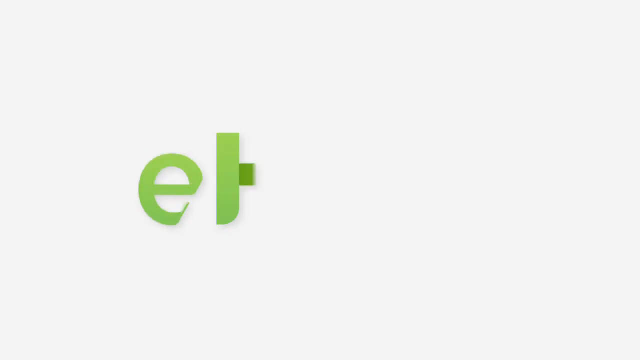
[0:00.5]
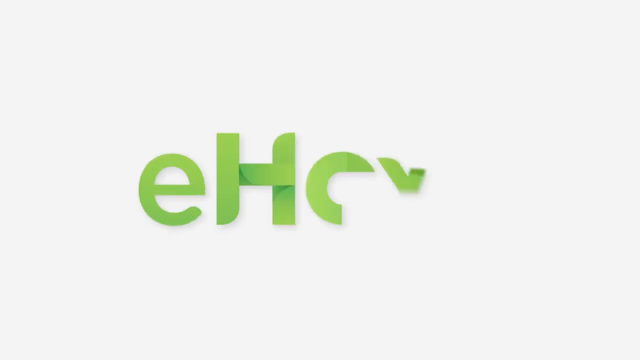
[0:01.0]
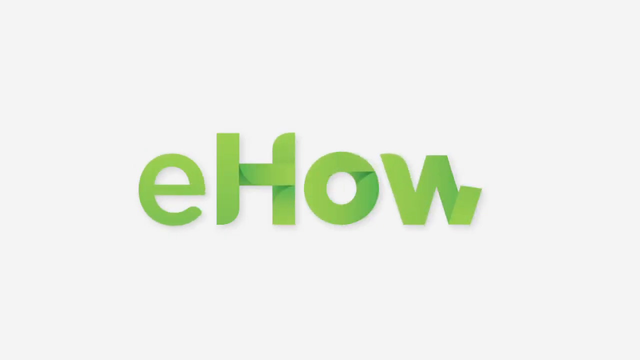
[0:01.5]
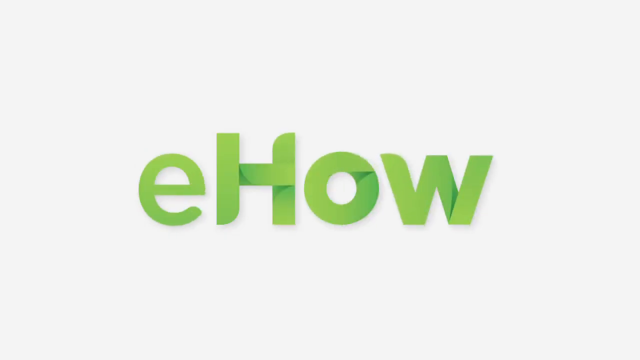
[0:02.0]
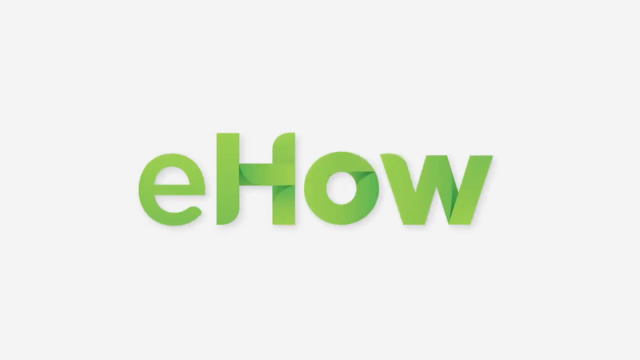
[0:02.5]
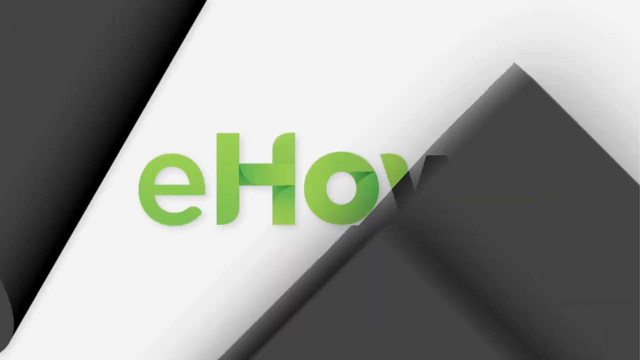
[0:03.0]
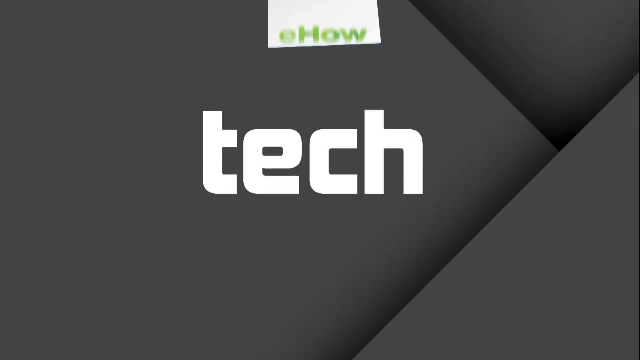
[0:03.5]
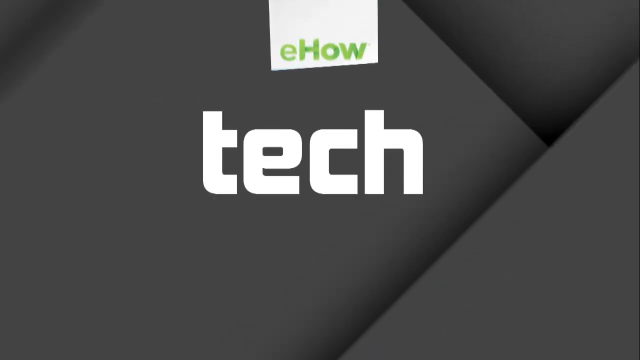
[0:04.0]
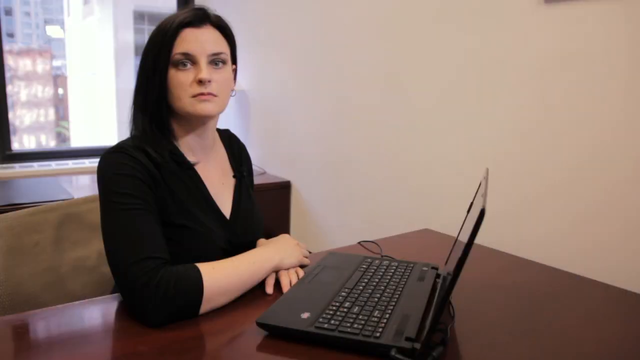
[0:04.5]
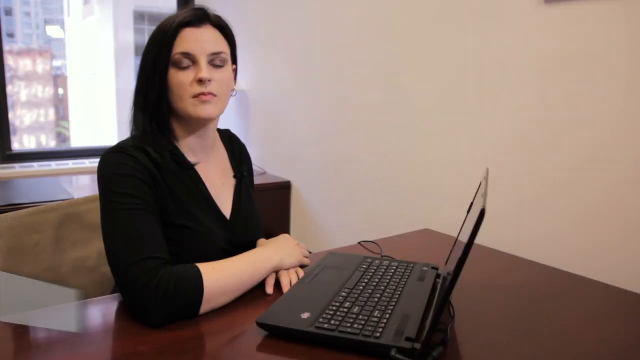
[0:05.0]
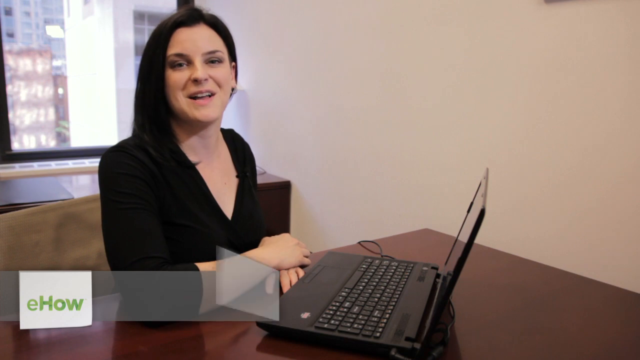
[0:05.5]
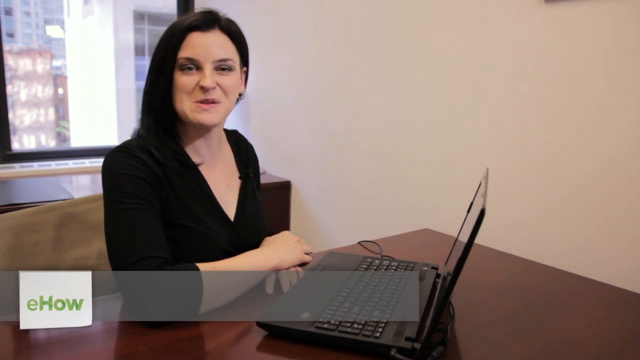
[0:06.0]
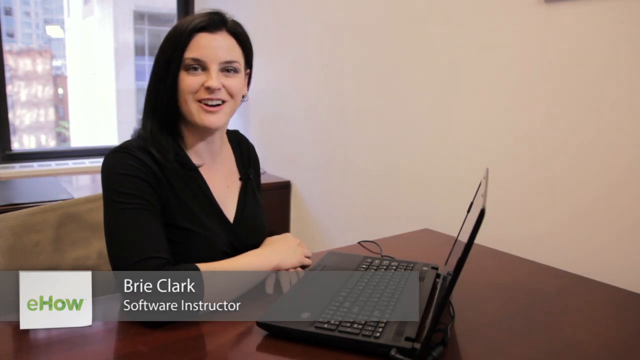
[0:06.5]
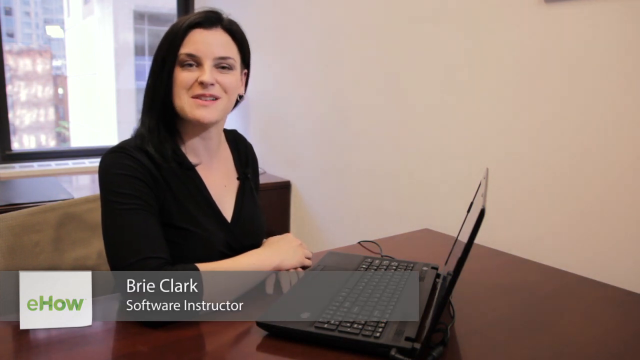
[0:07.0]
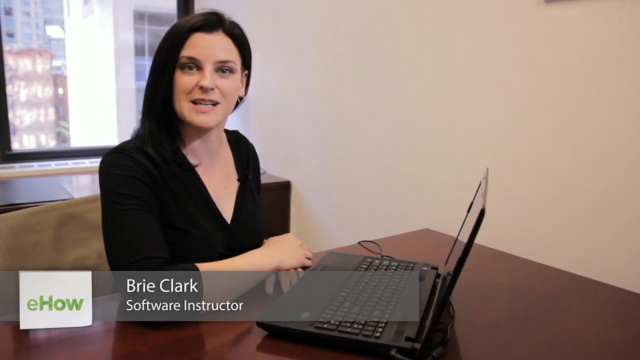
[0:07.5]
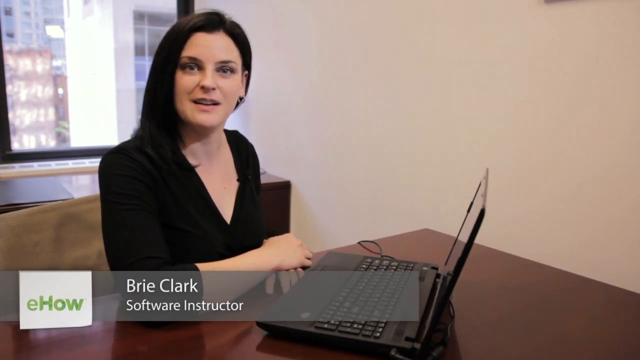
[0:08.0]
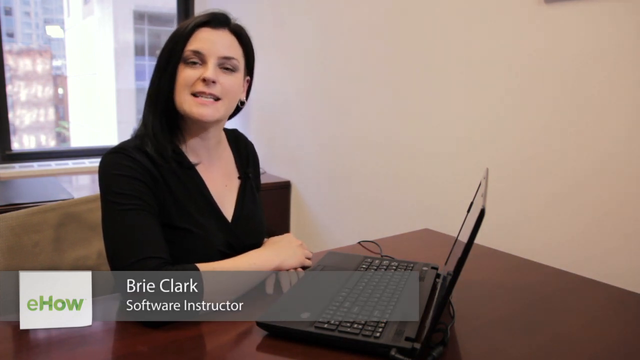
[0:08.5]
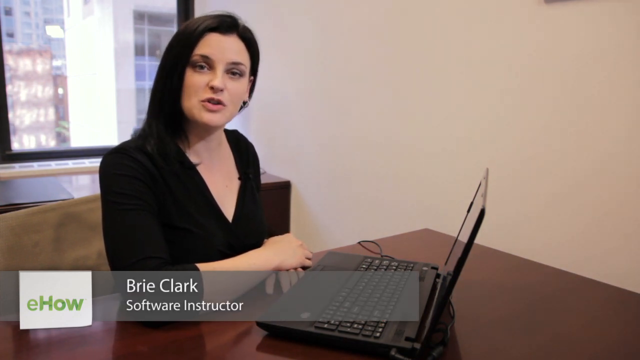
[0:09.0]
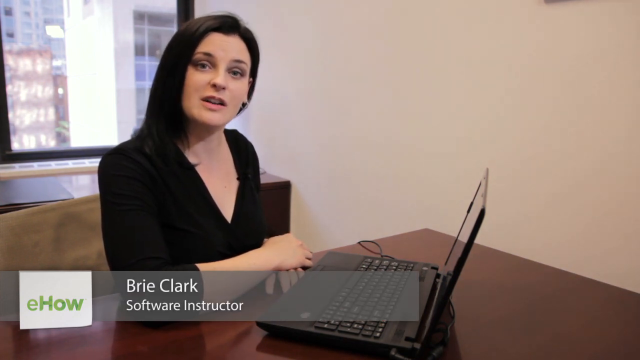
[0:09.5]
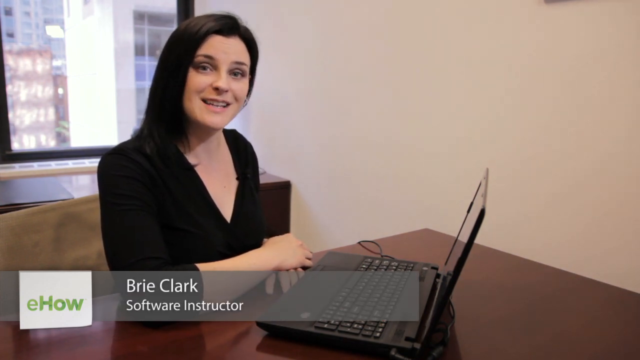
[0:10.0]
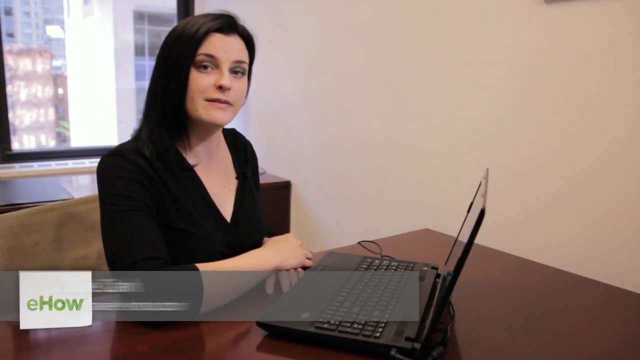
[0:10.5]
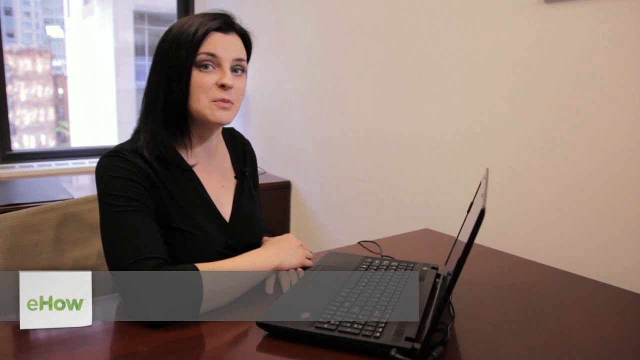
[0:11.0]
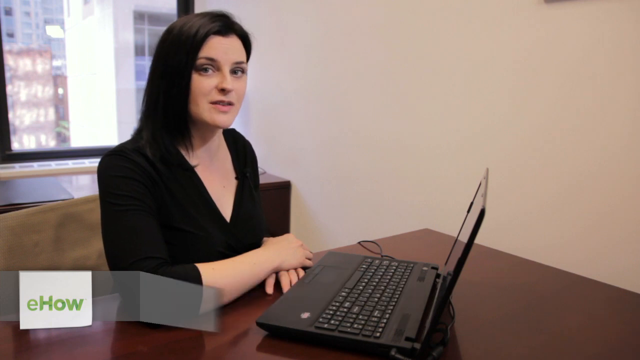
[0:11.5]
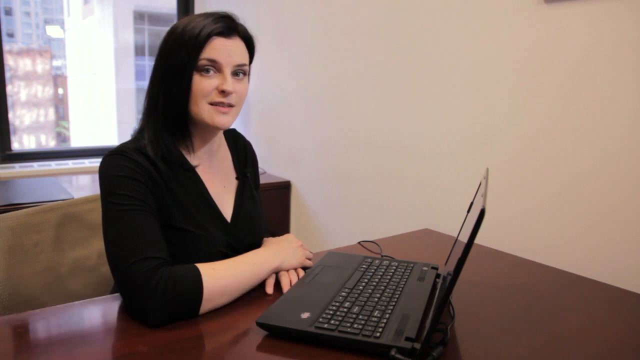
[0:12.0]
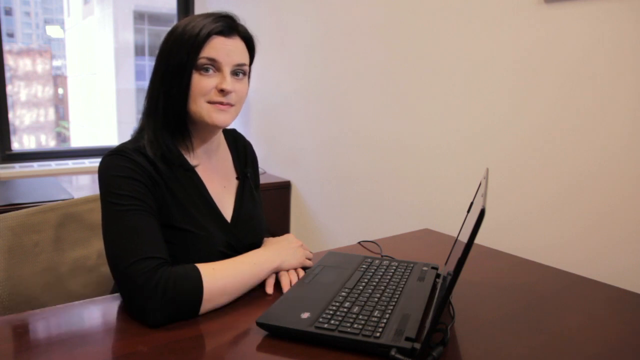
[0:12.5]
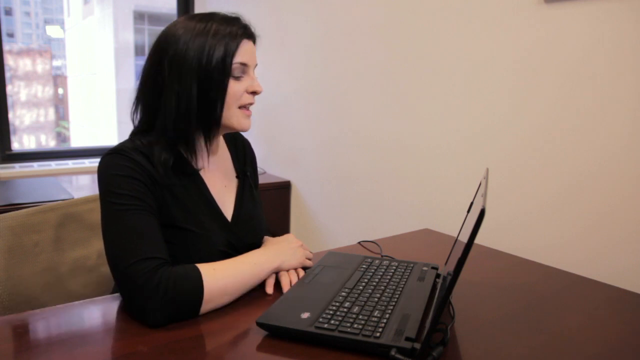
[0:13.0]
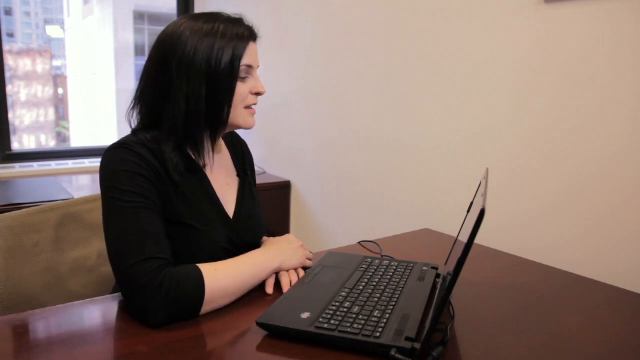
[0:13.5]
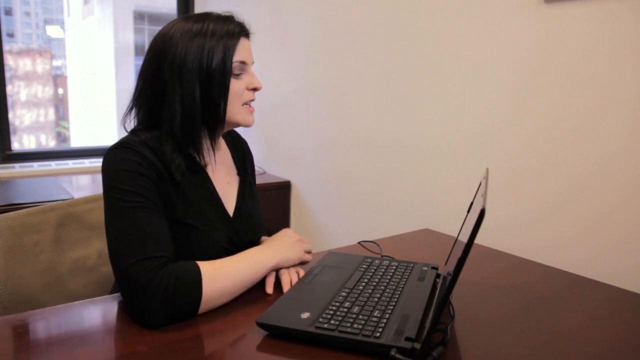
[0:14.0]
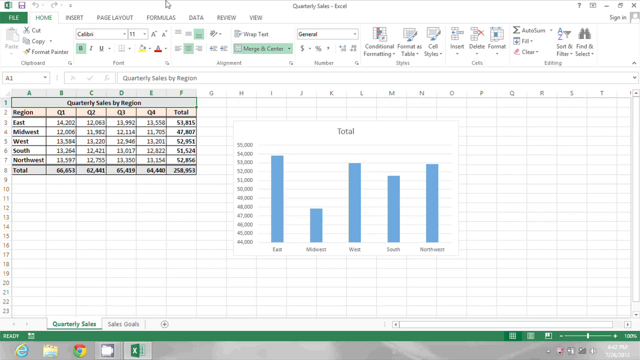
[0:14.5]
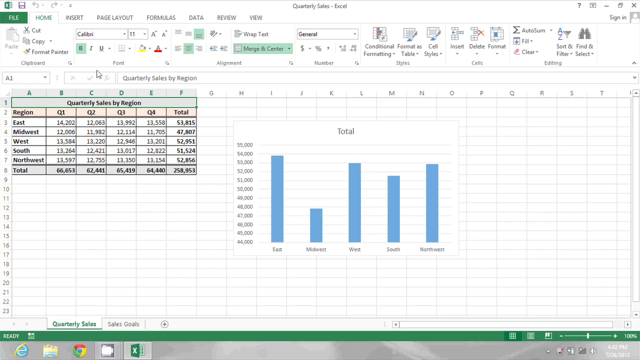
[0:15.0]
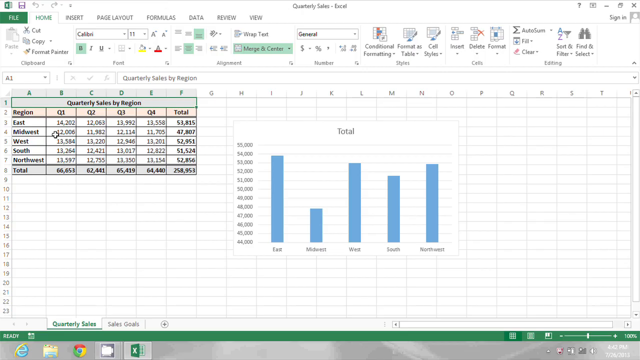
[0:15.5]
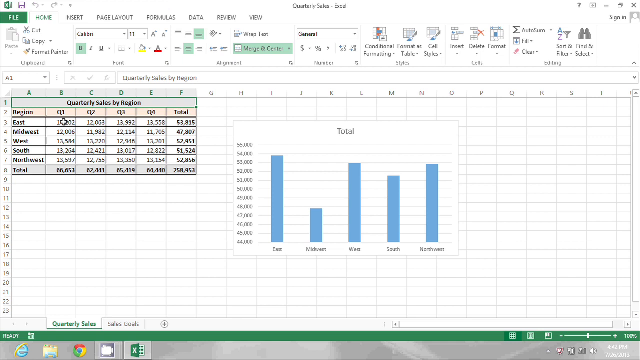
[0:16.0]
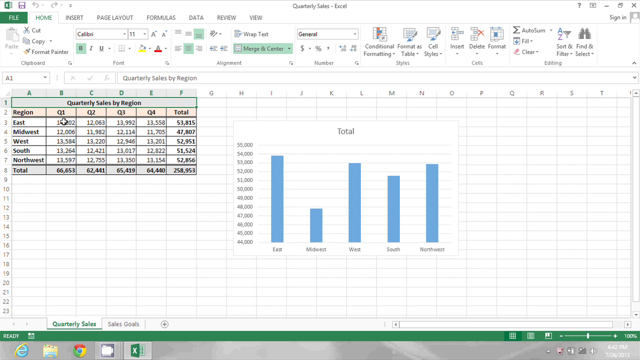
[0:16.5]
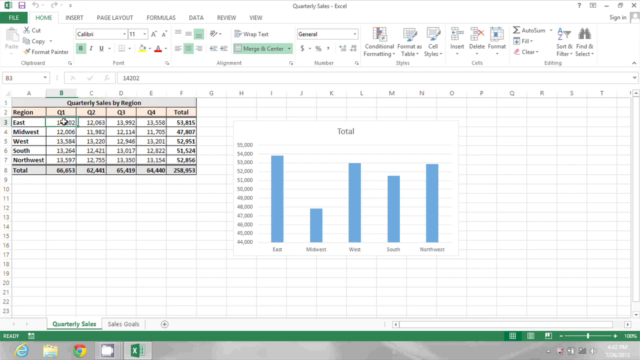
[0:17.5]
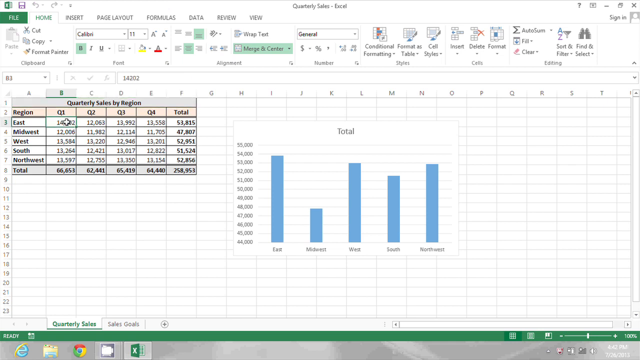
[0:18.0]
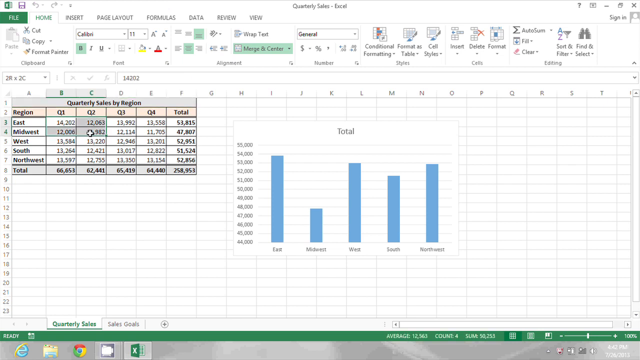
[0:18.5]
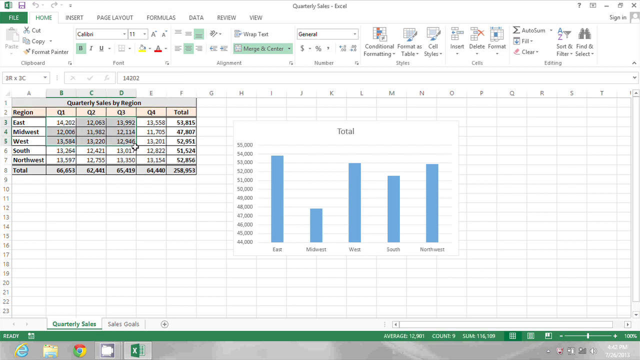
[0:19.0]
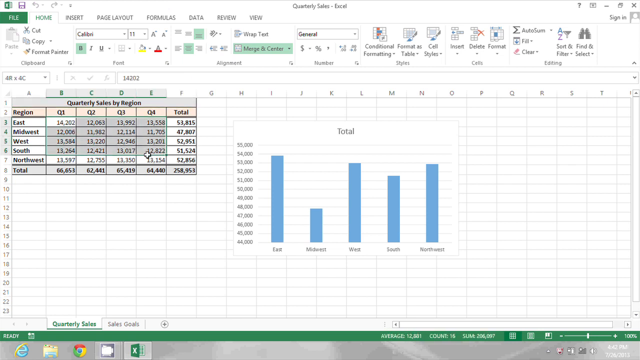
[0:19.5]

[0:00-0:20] The video opens on a white background where the word "ehow" appears in green text in a fancy font. It lands on the screen and transitions to a gray screen with the word "tech" in white popping in front of it. A ribbon comes down with the word "ehow" on top of the word "tech", and the scene transitions to a woman in front of a laptop. She speaks to the camera with a smiling face. Text in the bottom left corner of the screen, with the ehow logo and a gray bar behind it, identifies her as Brie Clark, a software instructor. She continues speaking to the camera in front of the laptop and looks toward the camera once the text disappears. The video then transitions to a Microsoft Excel document showing some information. She moves the mouse onto the quarter one part of the quarterly sales by region section, then clicks on the quarter one east section and highlights everything in that section.